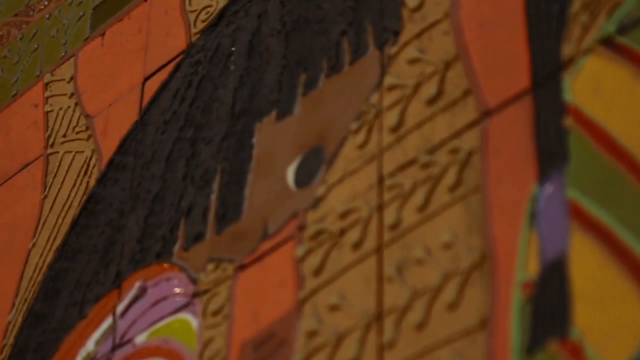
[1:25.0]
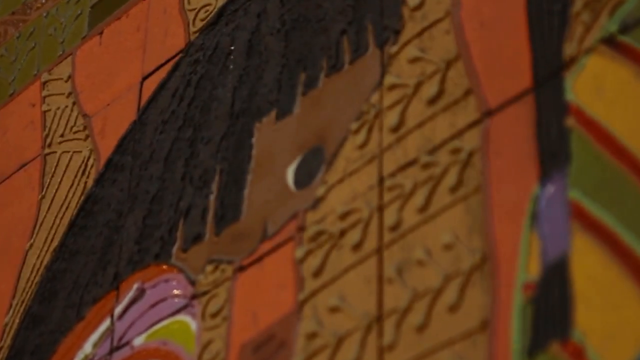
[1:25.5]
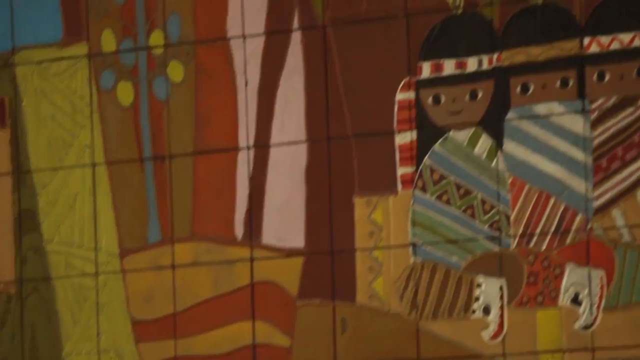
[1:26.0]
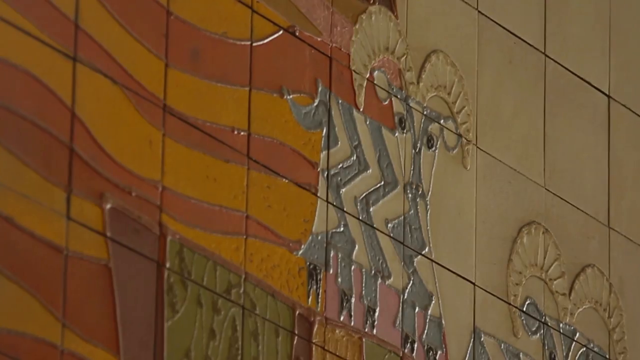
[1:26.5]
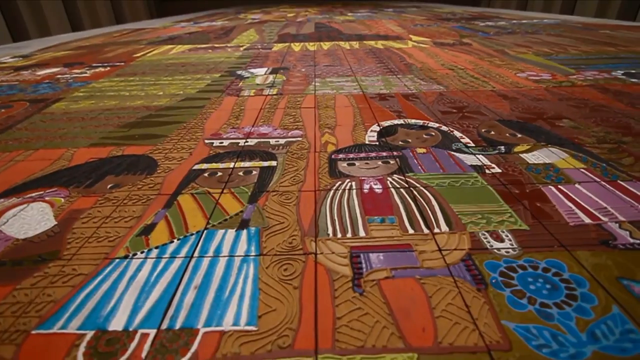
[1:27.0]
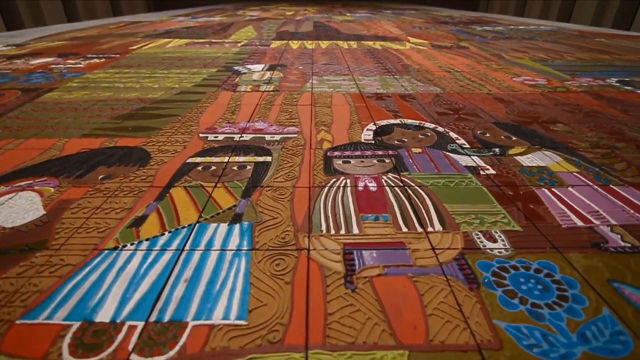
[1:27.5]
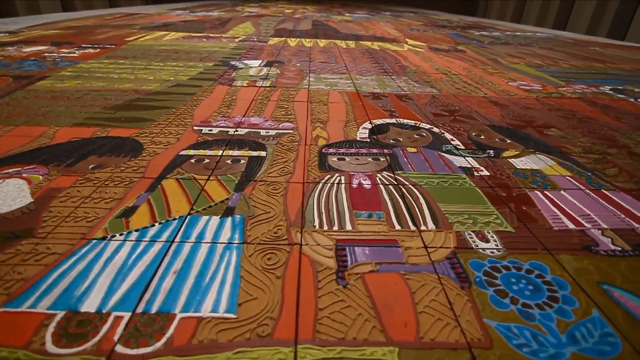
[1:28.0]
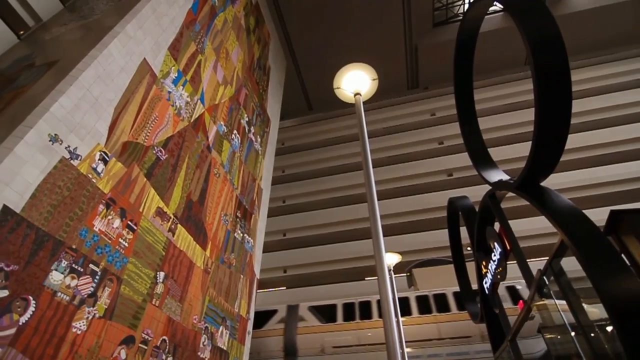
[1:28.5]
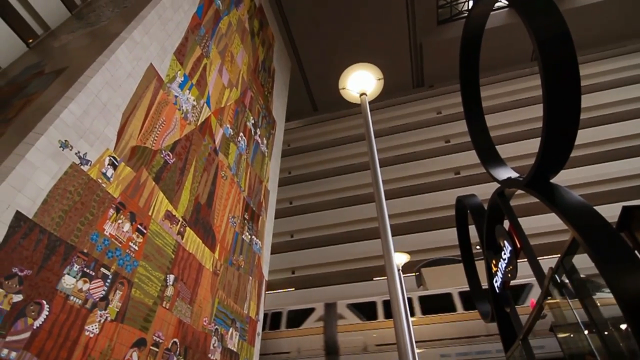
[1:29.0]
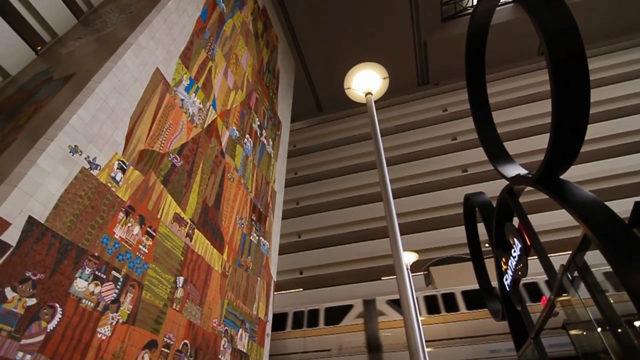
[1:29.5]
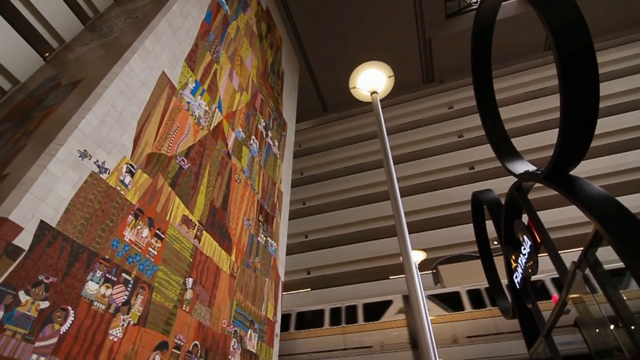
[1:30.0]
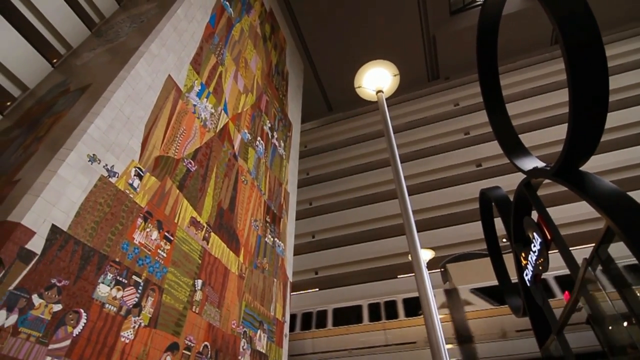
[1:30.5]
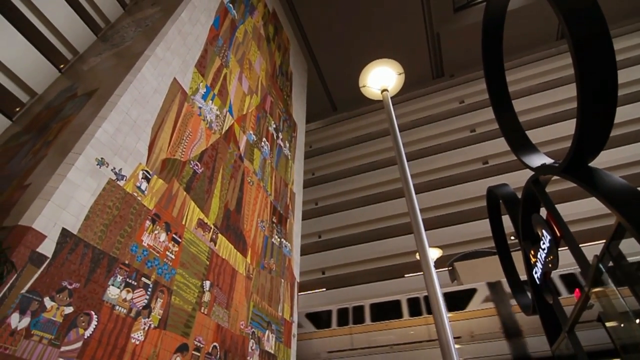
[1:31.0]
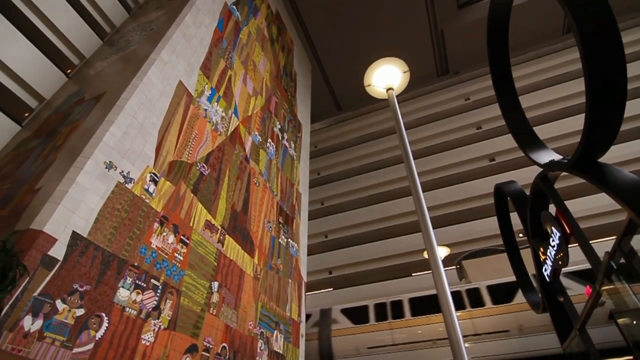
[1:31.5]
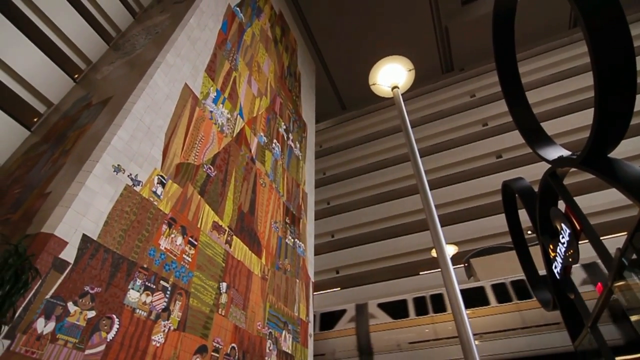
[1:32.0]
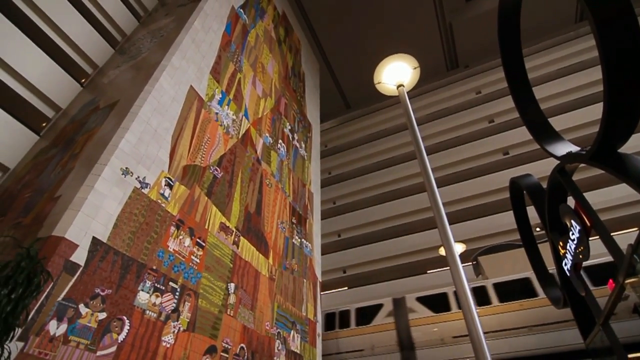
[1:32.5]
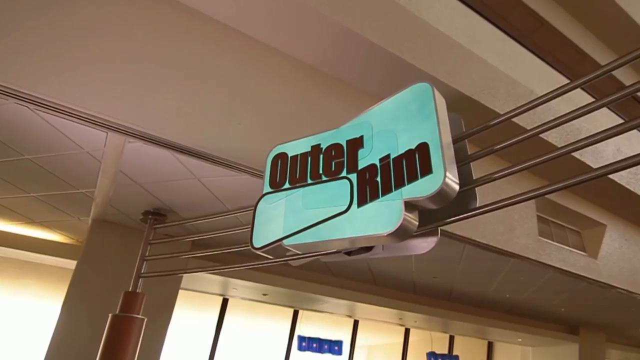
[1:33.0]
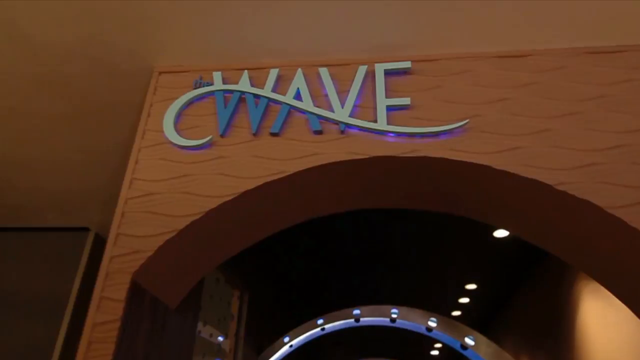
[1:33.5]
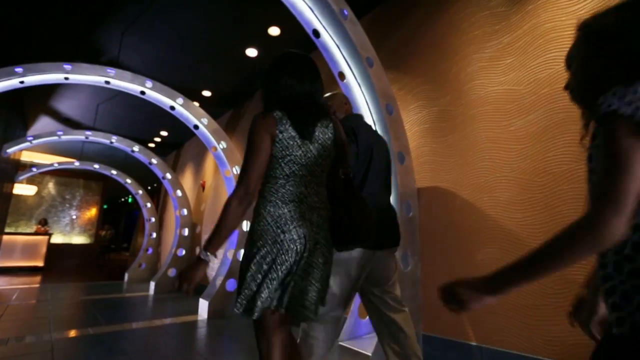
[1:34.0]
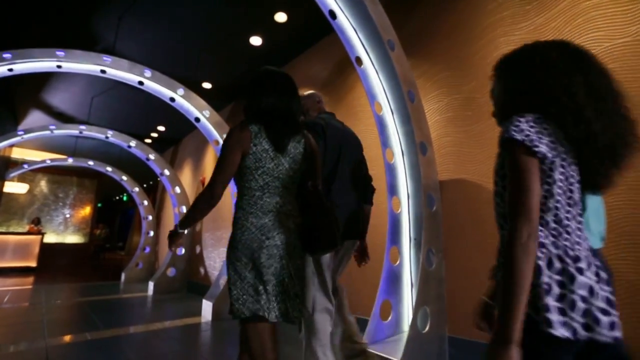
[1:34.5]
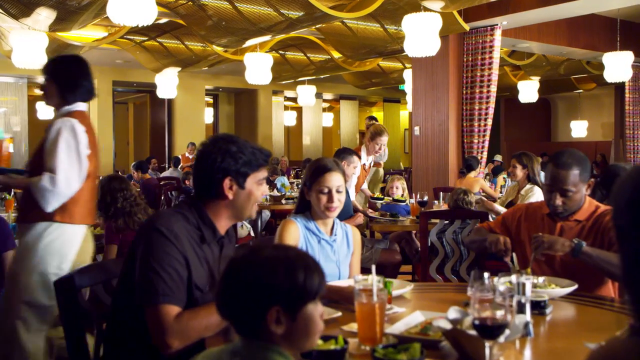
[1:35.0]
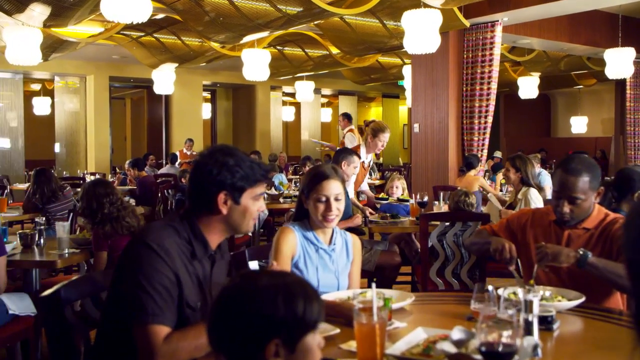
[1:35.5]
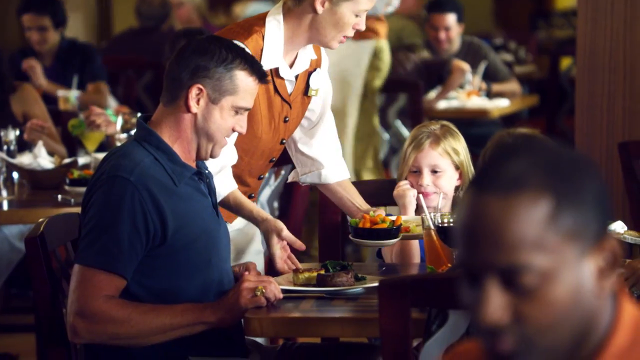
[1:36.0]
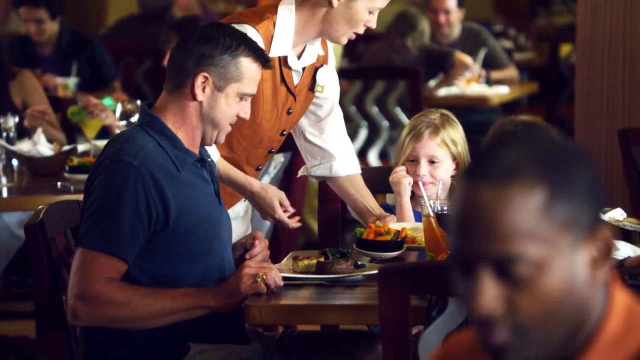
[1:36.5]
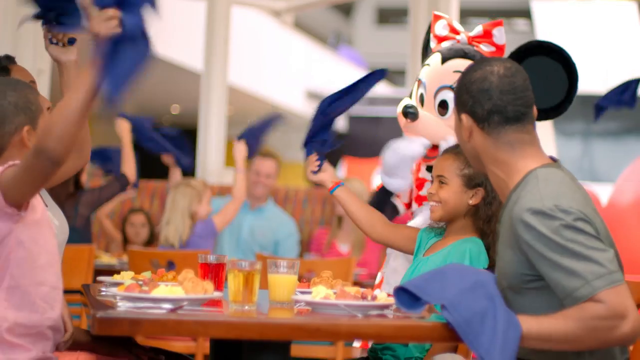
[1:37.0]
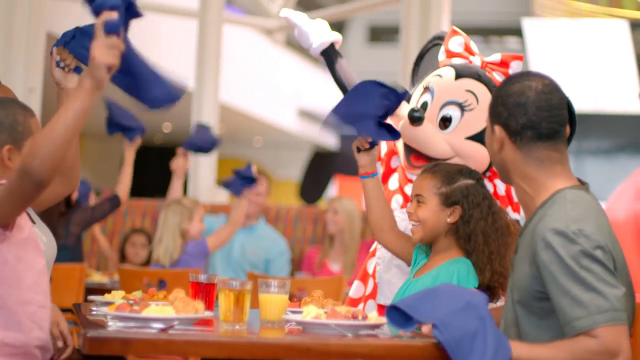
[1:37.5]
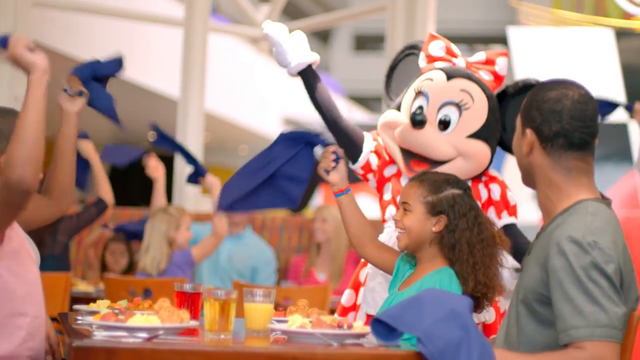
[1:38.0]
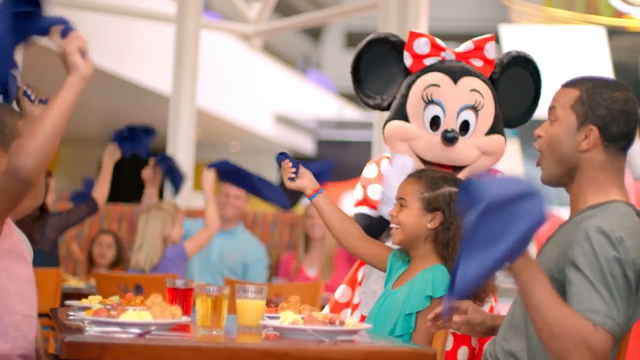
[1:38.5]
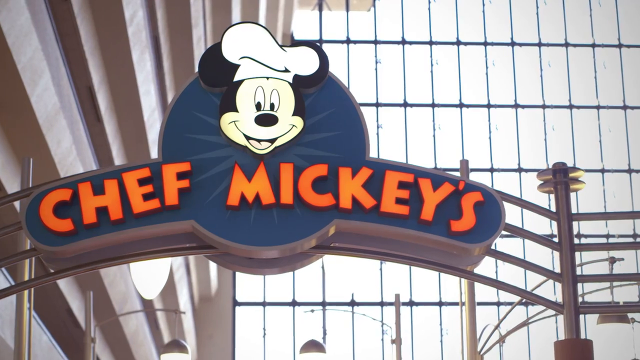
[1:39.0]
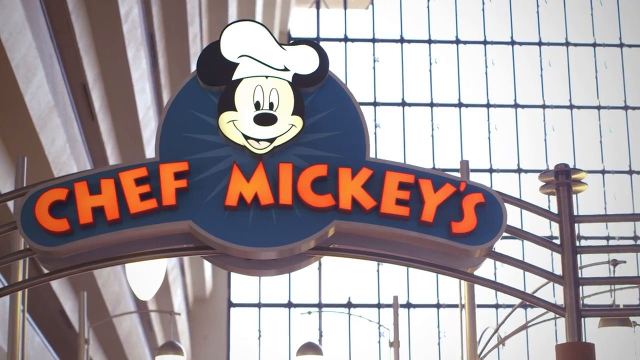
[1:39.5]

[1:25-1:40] Under the title "Disney's Contemporary Resort, Walt Disney World," an overview of the interior lobby shows a tile mural of Native nations, at least 10 stories high, along the back of the lobby. The video zooms in on the individual tiles and the images of the different nations represented. In the mural shot, the monorail is visible along the right side going behind the mural. The video then moves through the different restaurants in the resort, with names including "The Wave," "Outer Rim," "Contempo Cafe" and "Chef Mickey's." Families sit in the restaurants eating and enjoying each other's company, and cartoon characters come by their tables to entertain and play with the children.